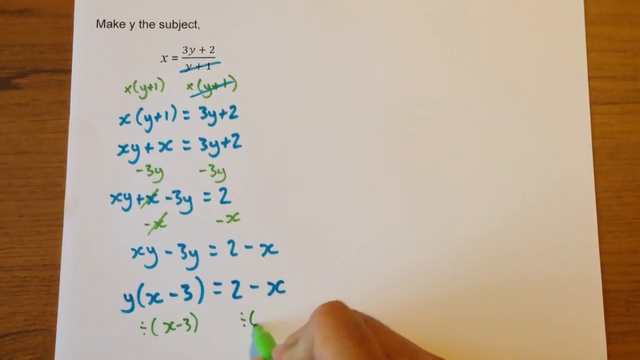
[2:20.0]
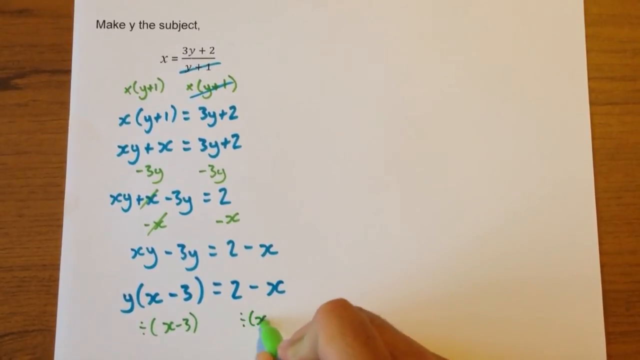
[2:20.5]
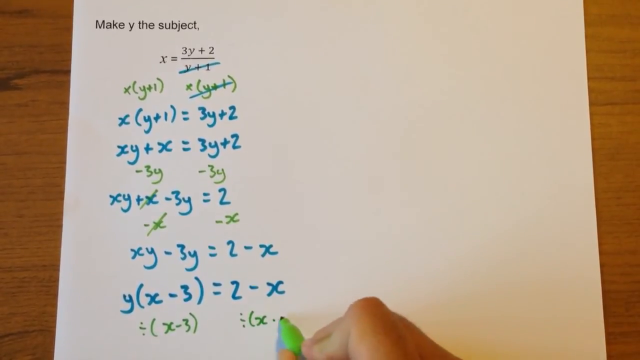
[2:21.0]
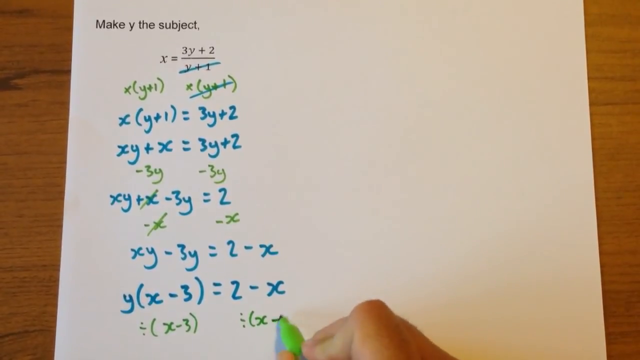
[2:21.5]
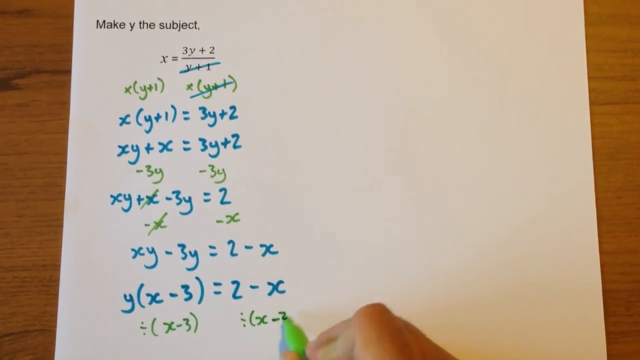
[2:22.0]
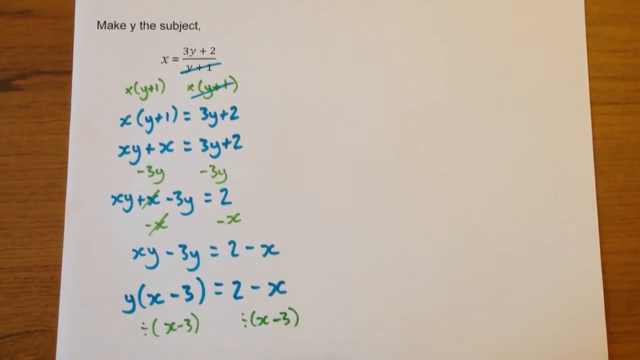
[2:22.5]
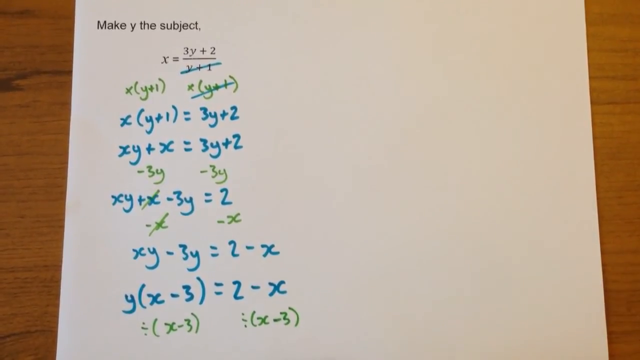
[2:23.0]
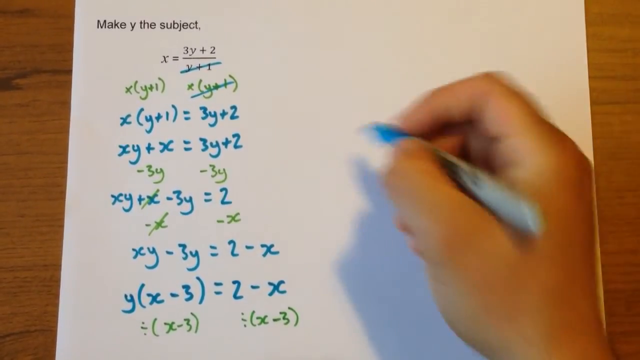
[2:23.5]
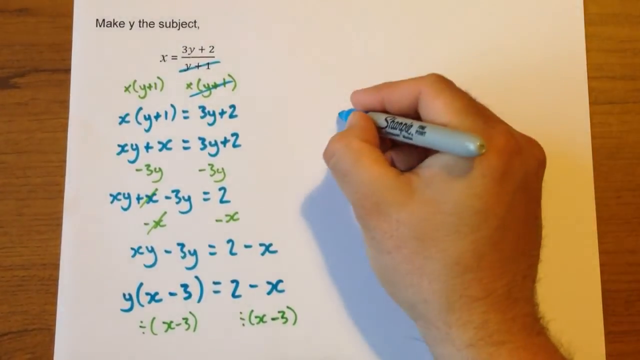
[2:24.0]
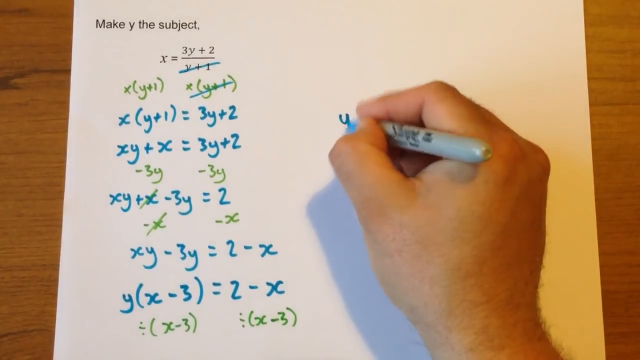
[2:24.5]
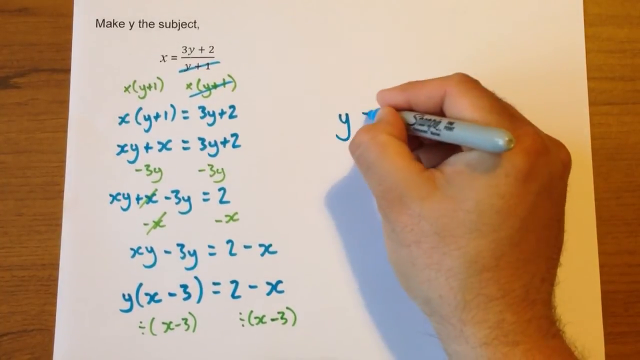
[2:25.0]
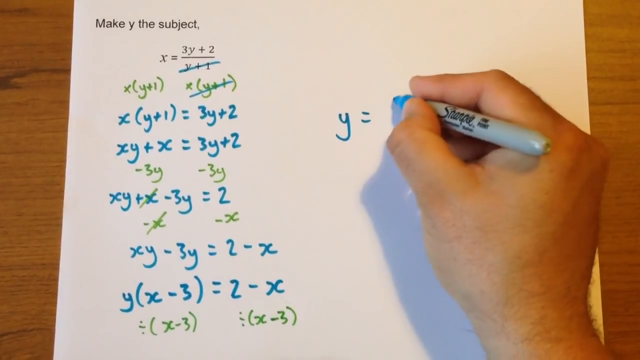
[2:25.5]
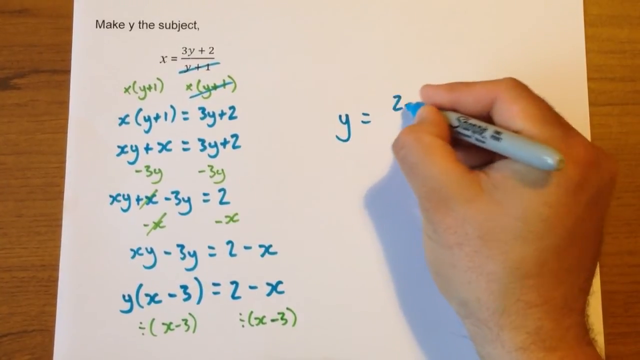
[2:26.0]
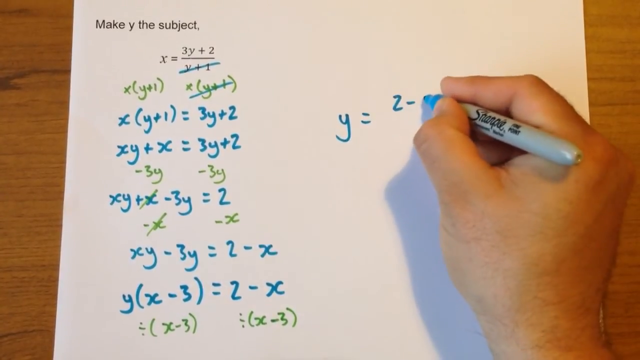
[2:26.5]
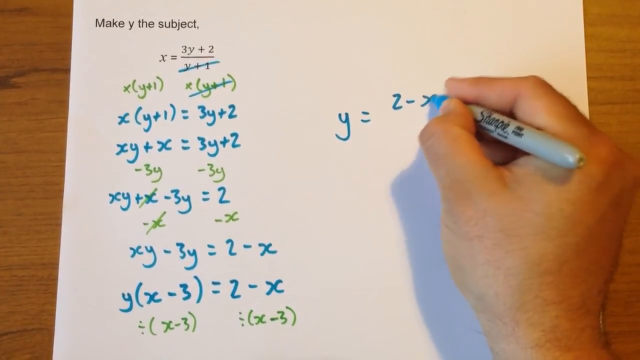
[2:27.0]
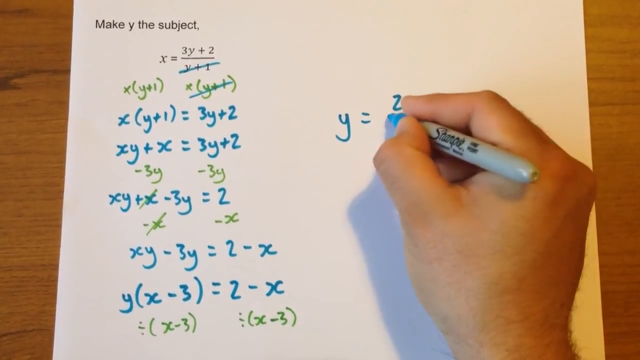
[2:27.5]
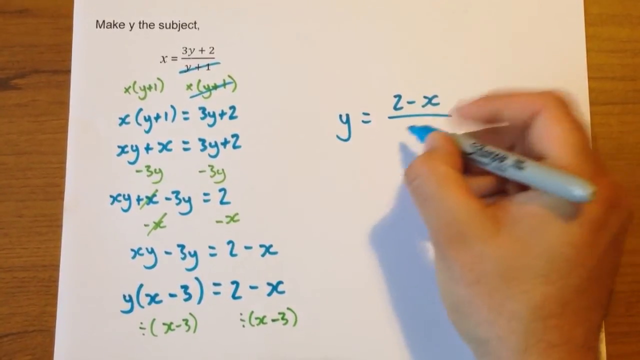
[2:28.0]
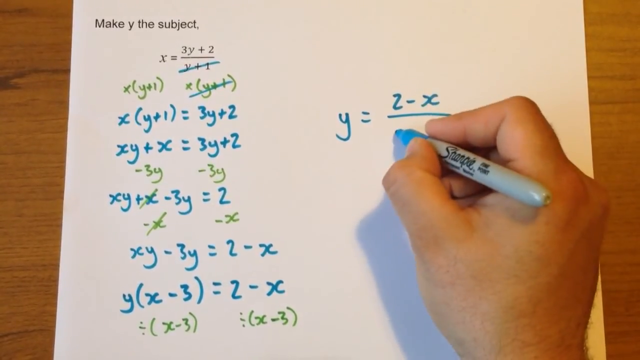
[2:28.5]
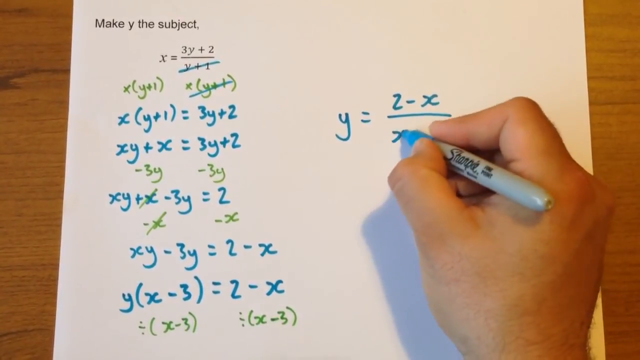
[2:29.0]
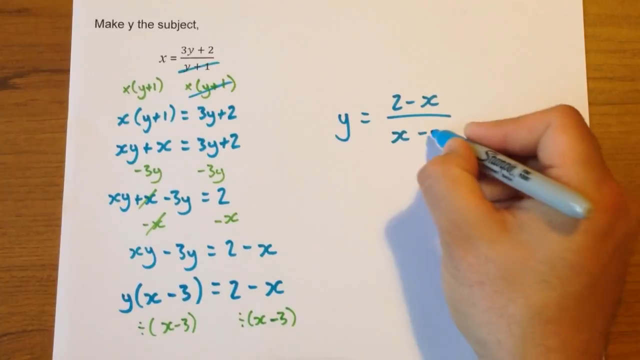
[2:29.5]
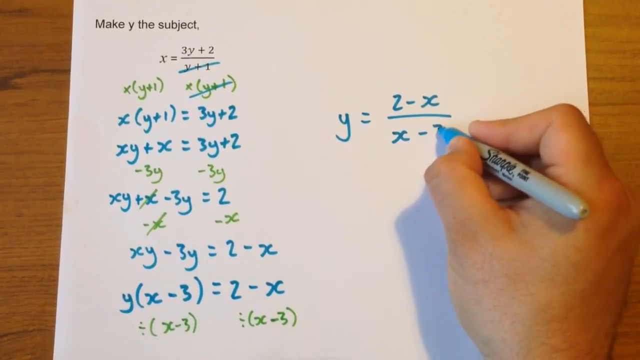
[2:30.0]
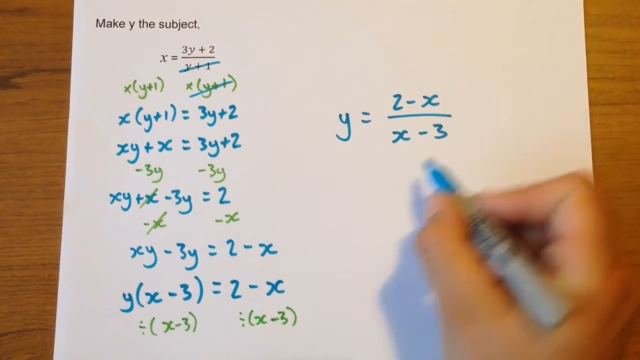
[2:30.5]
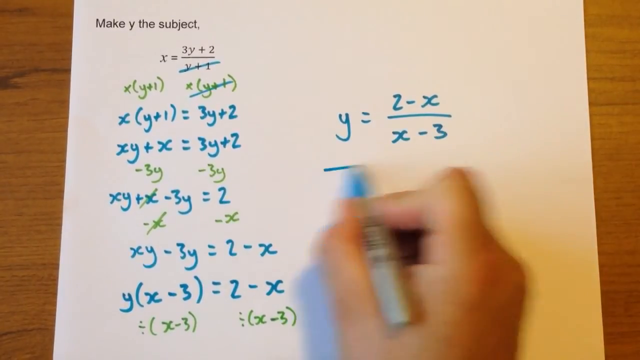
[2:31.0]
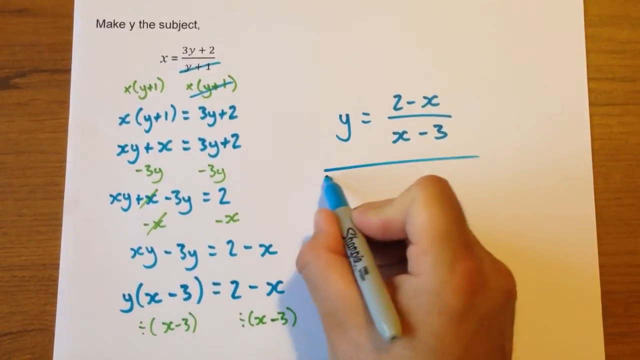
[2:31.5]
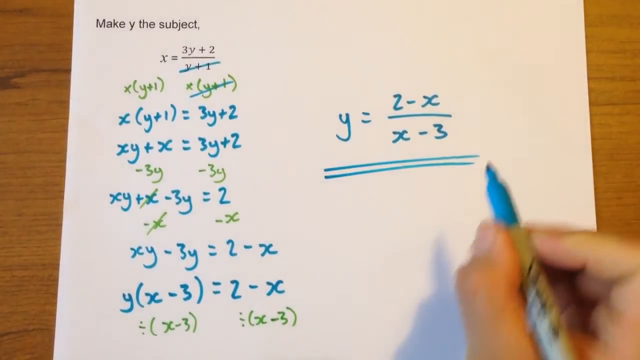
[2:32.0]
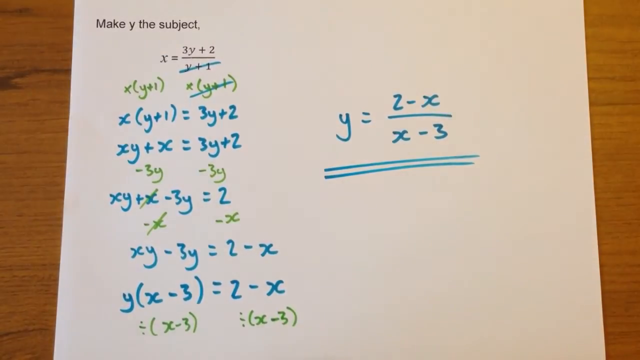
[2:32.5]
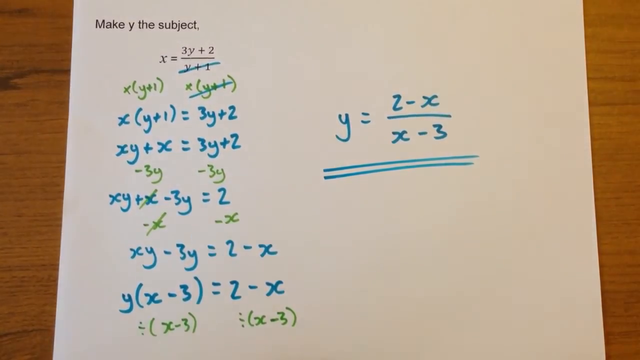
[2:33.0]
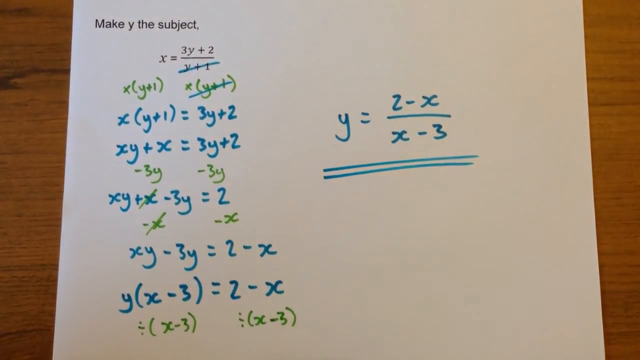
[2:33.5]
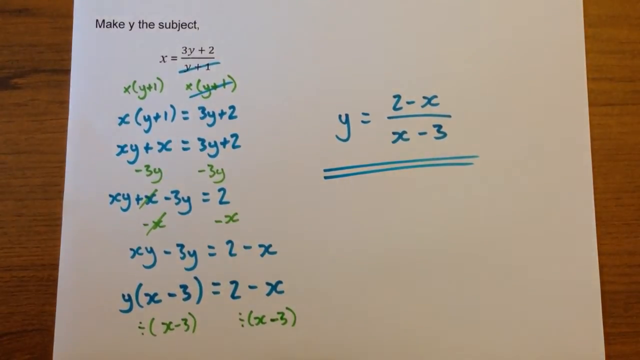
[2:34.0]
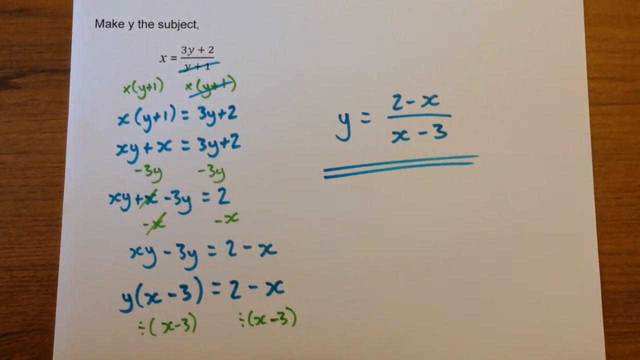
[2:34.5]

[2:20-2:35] The equation x = (3y + 2)/(y + 1), written or typed in black, is on a white piece of paper on a brown table. A right-handed Caucasian male, who uses a blue or green Sharpie, is now using the green Sharpie. At the very bottom, (x − 3) appears, and then the same (x − 3) again. In blue Sharpie, the answer is y = (2 − x)/(x − 3).